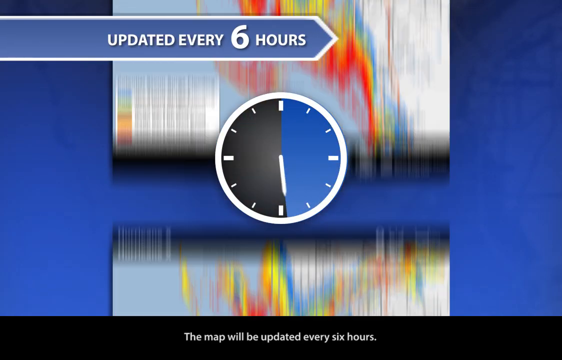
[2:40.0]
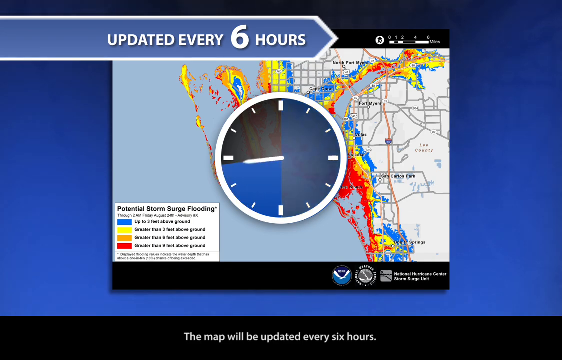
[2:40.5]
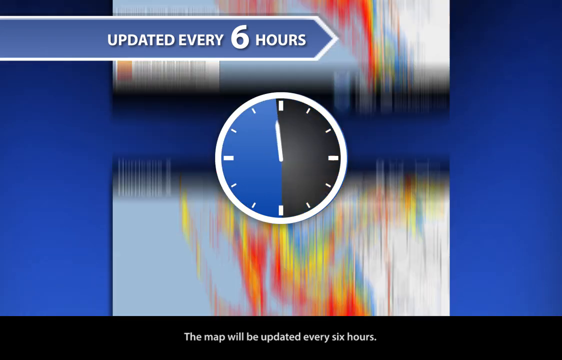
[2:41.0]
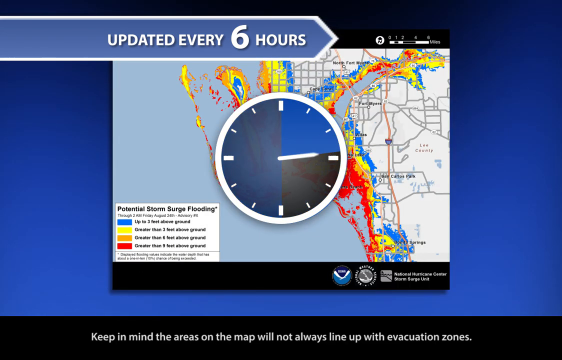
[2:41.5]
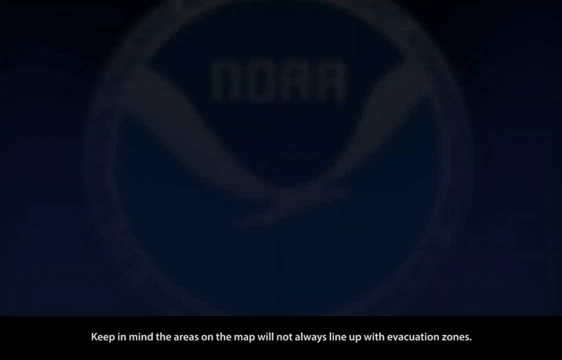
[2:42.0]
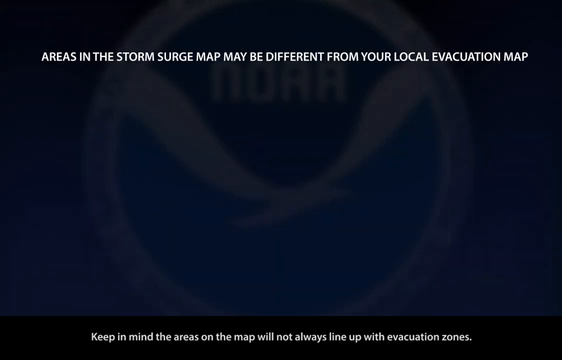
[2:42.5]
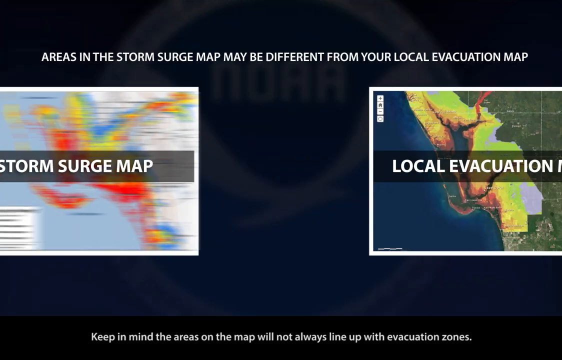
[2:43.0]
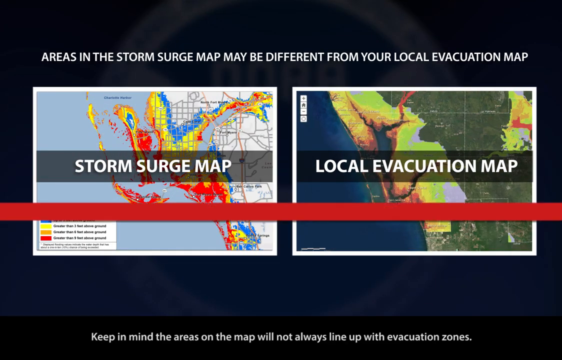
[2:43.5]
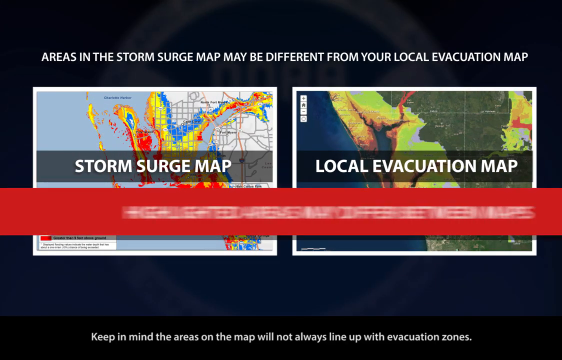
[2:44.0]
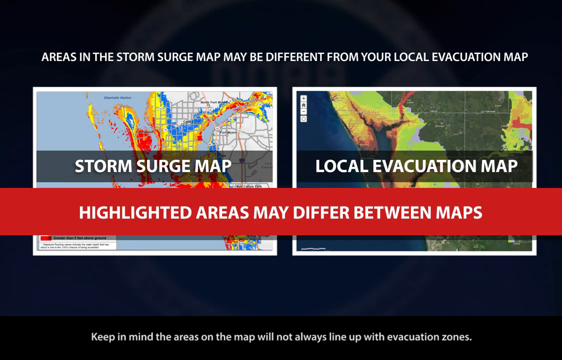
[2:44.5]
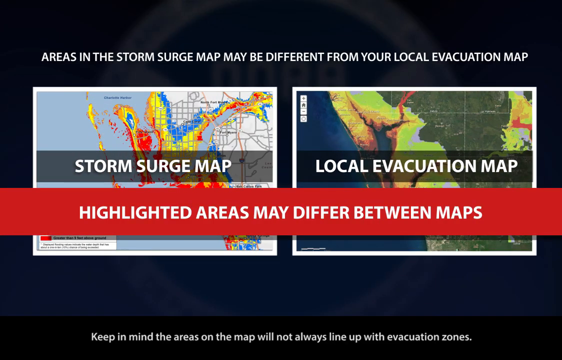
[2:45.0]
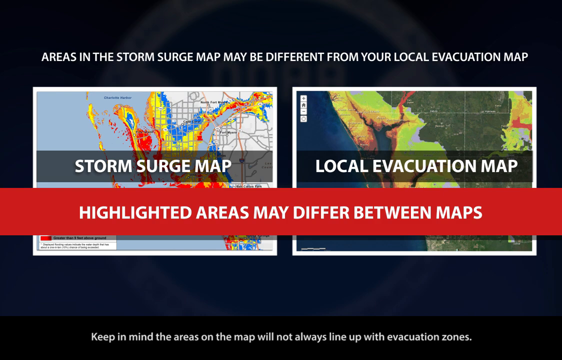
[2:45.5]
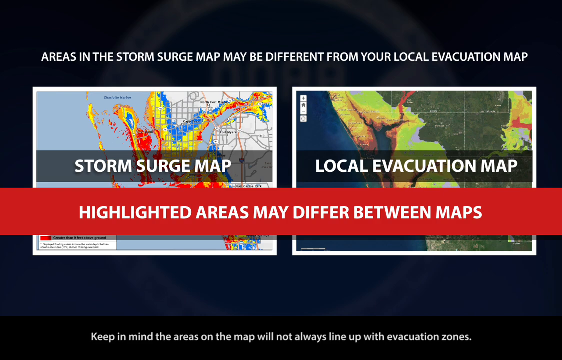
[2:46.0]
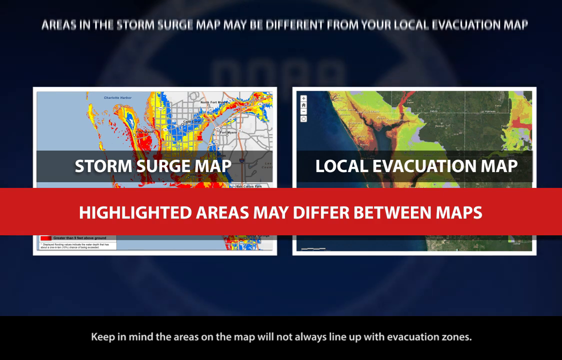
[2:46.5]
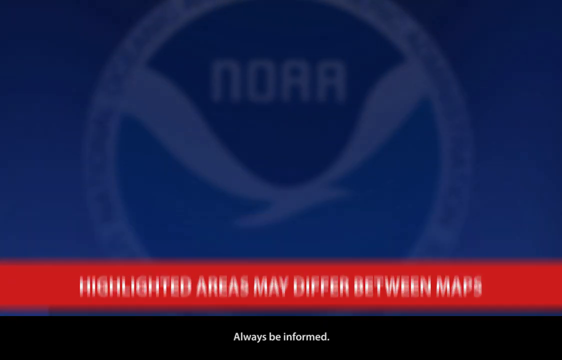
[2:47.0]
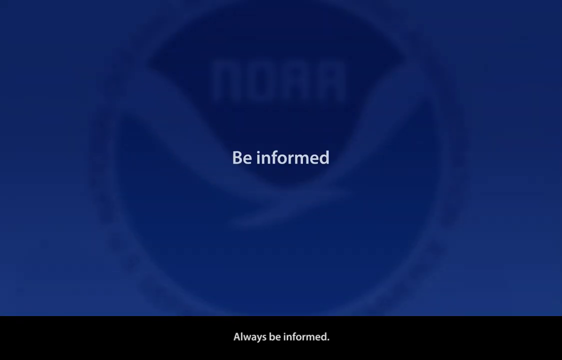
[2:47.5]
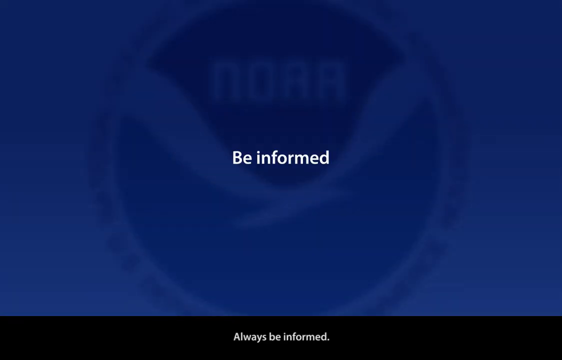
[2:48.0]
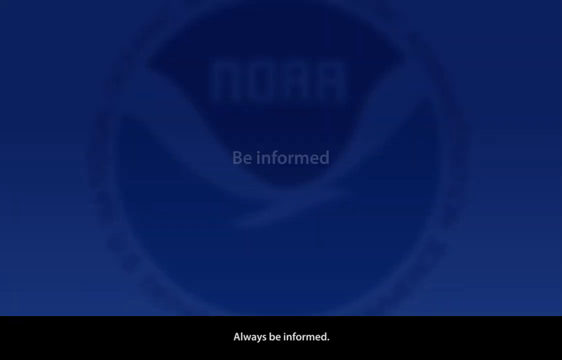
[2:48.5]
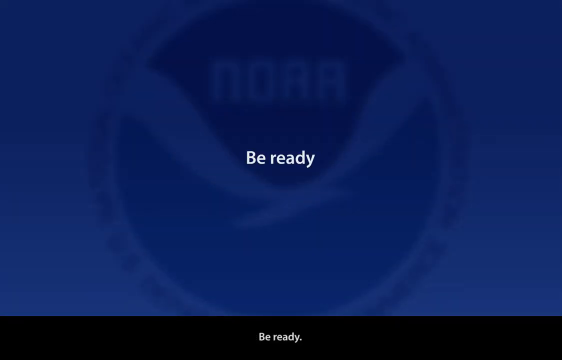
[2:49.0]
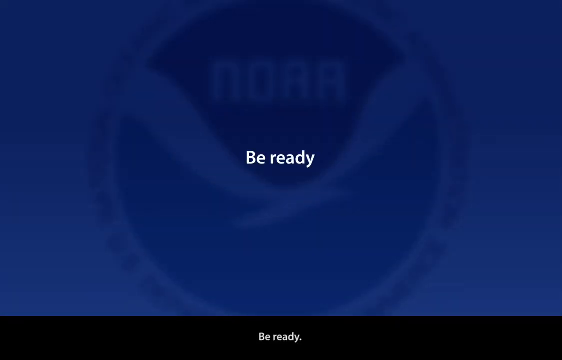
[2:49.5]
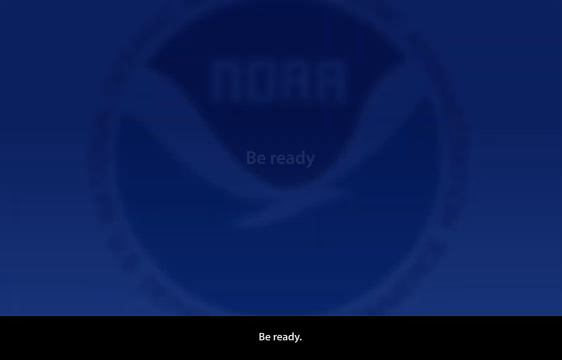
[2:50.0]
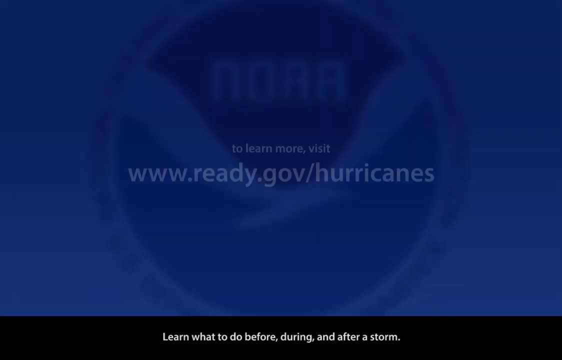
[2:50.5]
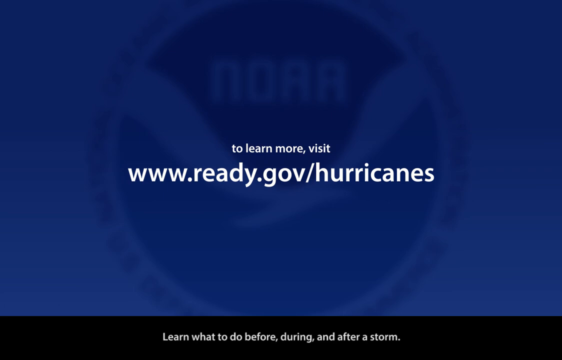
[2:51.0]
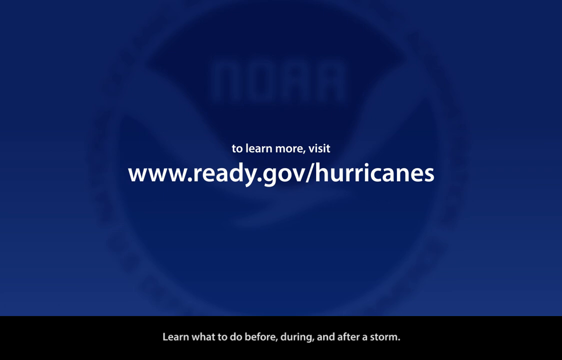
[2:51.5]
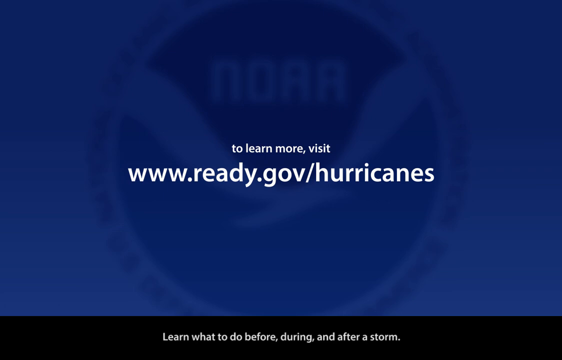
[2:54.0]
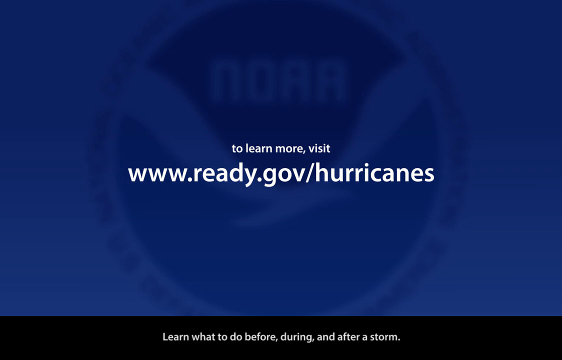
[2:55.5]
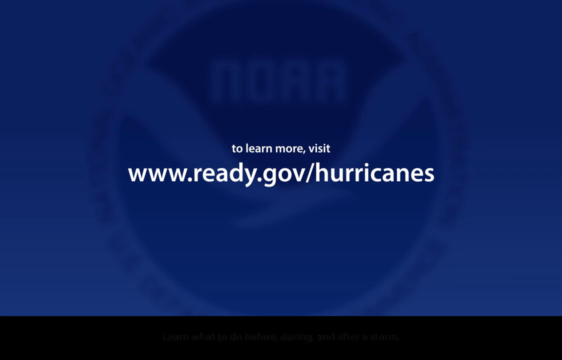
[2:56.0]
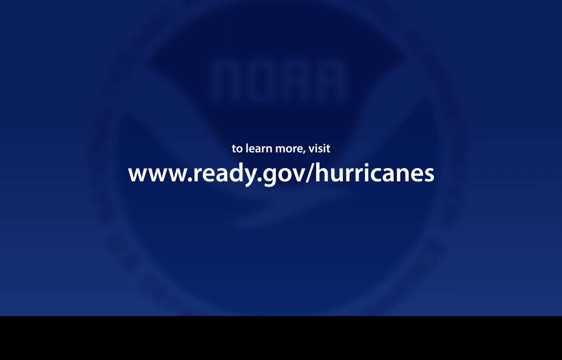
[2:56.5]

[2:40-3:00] A blue background screen says "updated every six hours" with a picture of a clock that is half black and half blue, with the six highlighted. The map appears, and the clock moves. Text says "areas in the storm surge map may be different from your local evacuation map." The storm surge map is on the left, in a lighter blue with different colors highlighting the storm effects for the area, and to the right is a blue and yellow-green map labeled "local evaluation map." In red with white lettering it says "highlighted areas may differ between maps." A blue screen then says "be informed, be ready" and "To learn more, visit www.ready.gov/hurricanes."